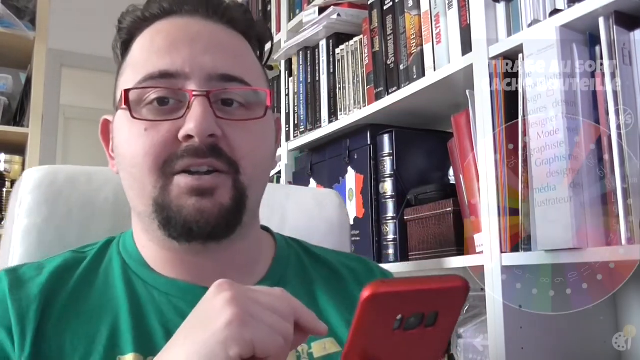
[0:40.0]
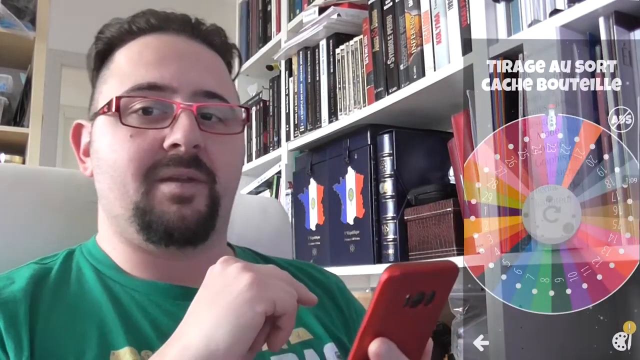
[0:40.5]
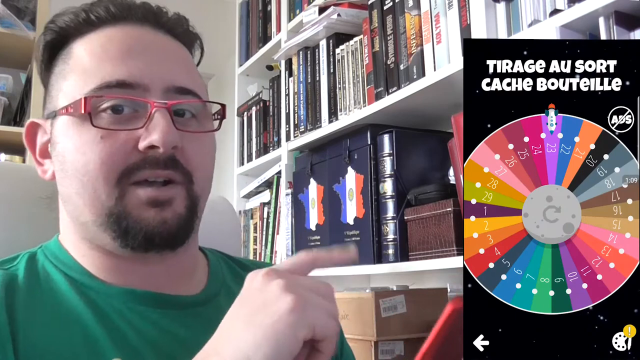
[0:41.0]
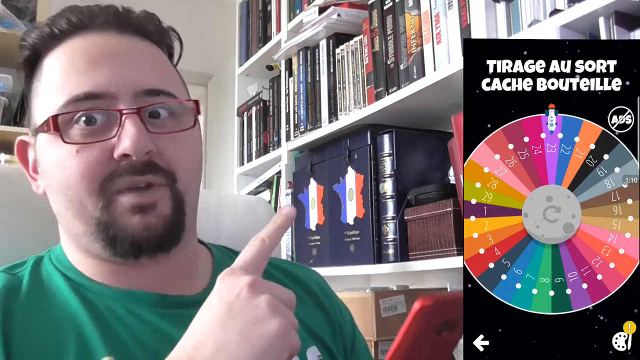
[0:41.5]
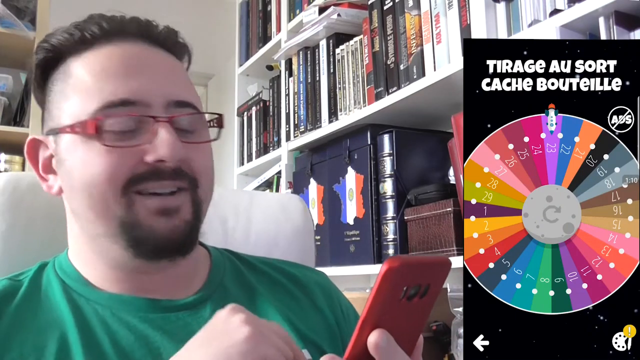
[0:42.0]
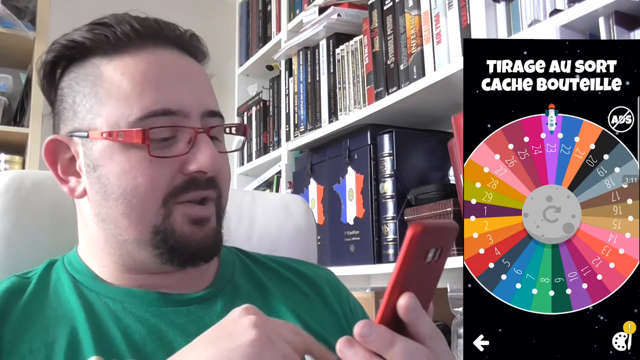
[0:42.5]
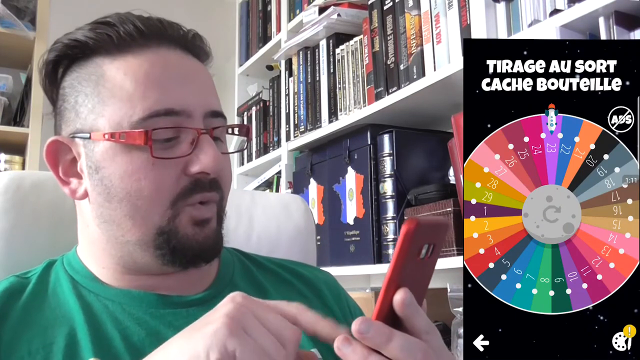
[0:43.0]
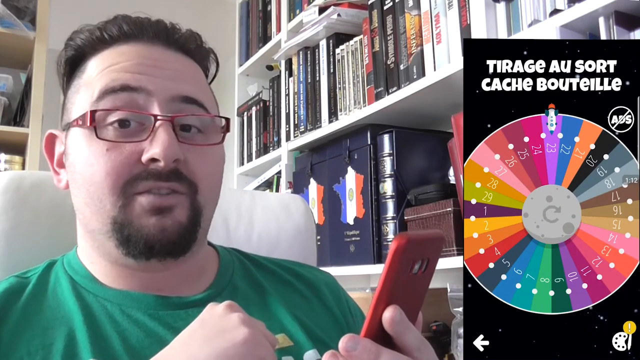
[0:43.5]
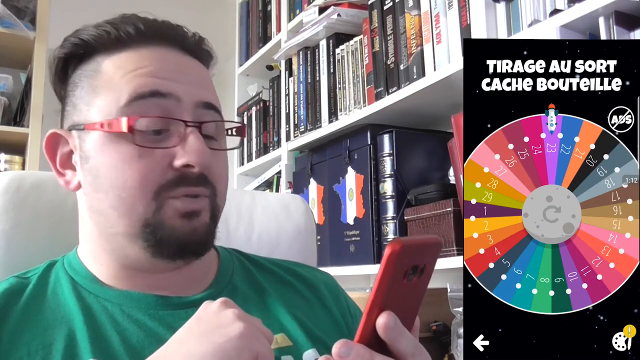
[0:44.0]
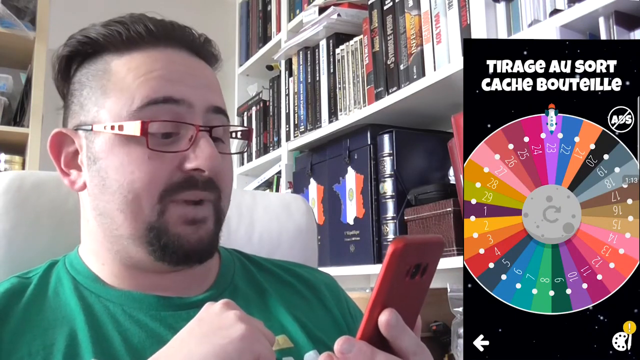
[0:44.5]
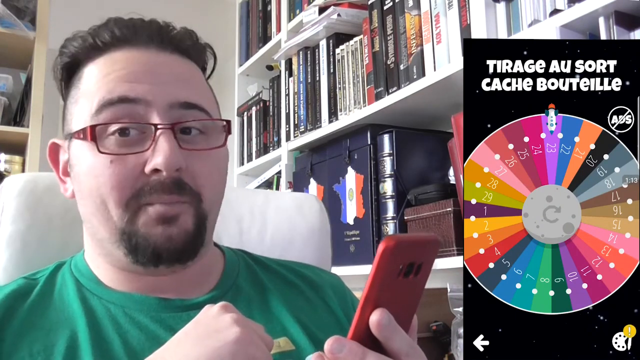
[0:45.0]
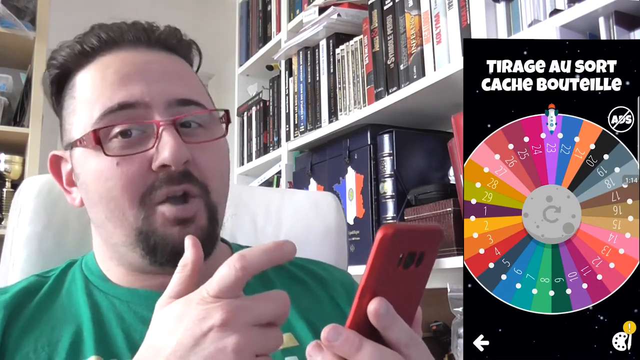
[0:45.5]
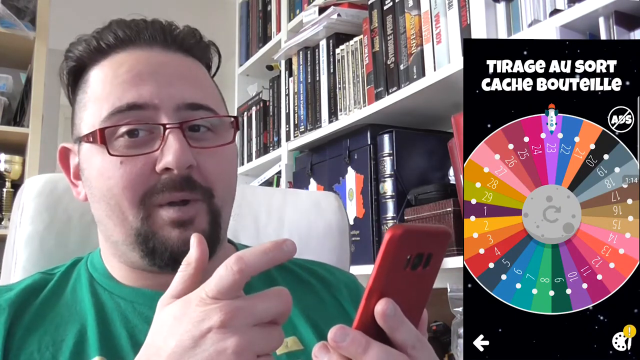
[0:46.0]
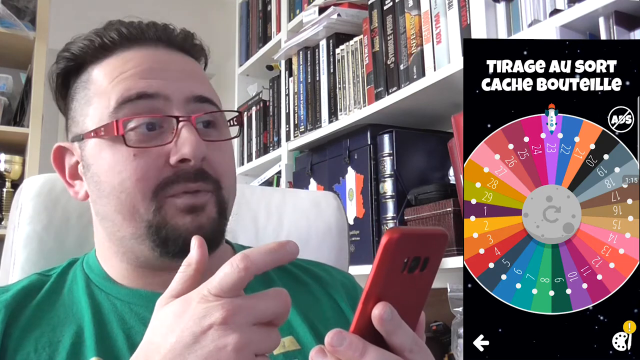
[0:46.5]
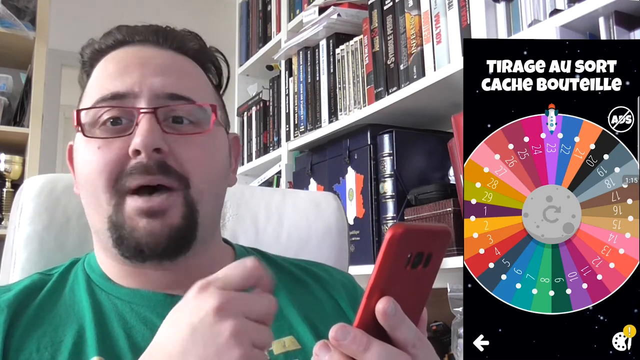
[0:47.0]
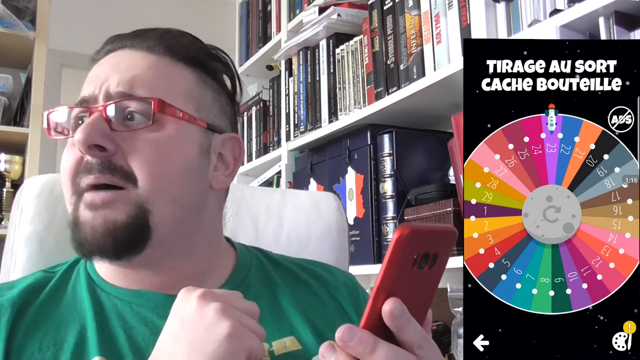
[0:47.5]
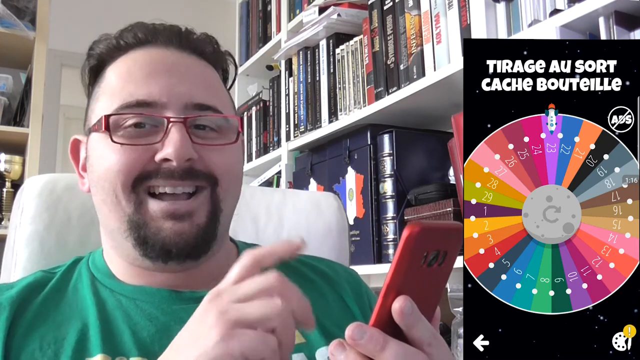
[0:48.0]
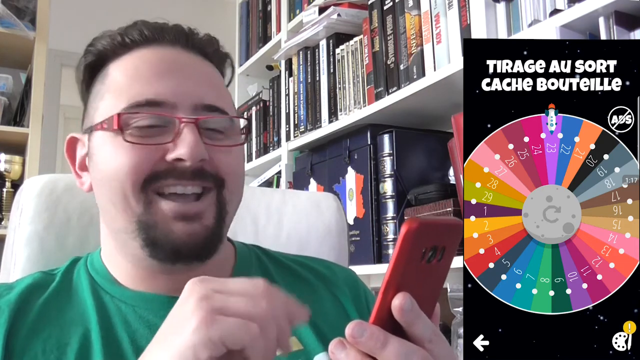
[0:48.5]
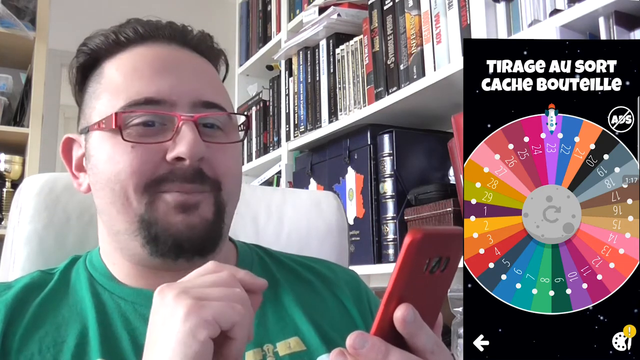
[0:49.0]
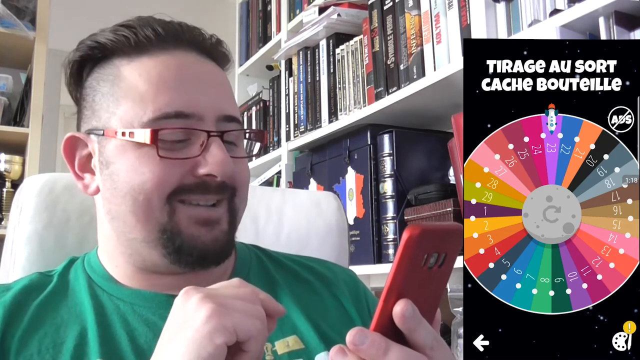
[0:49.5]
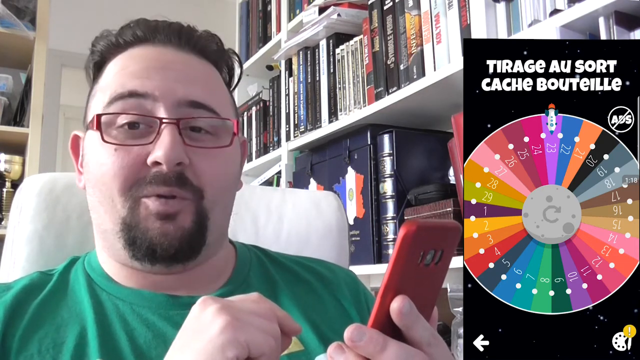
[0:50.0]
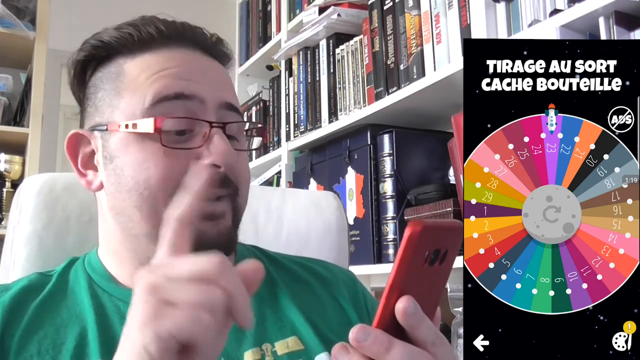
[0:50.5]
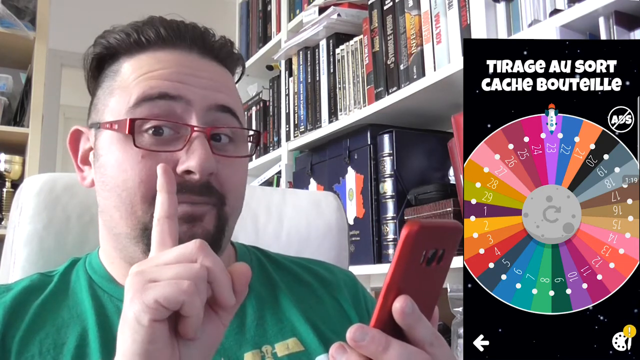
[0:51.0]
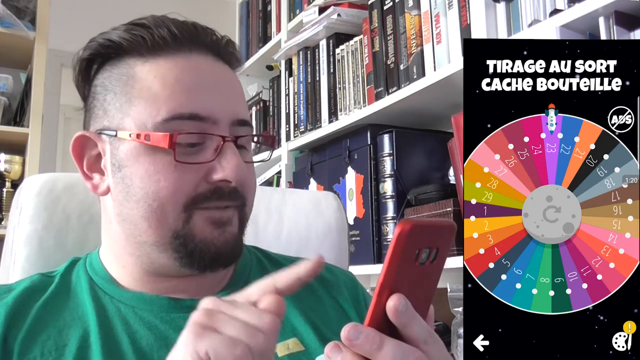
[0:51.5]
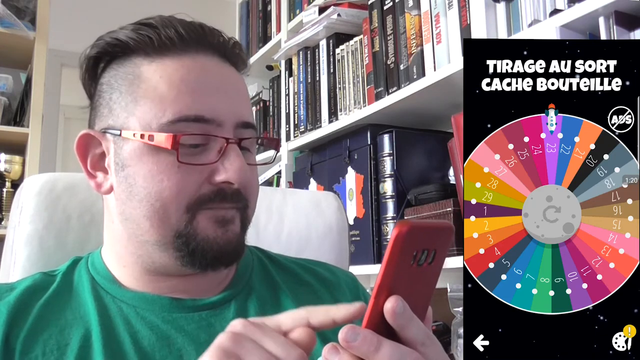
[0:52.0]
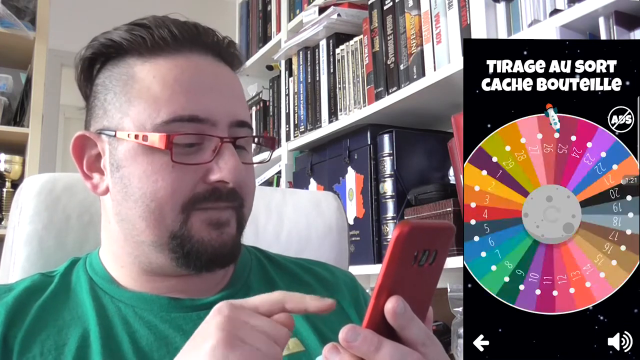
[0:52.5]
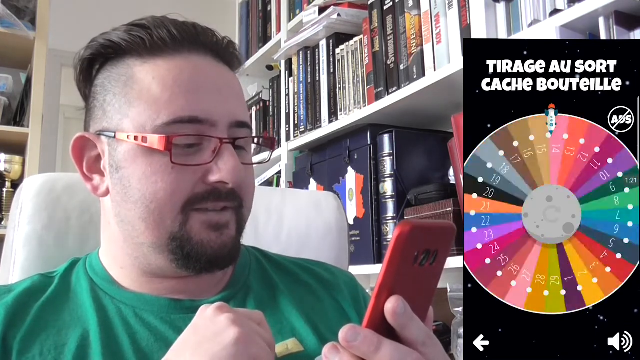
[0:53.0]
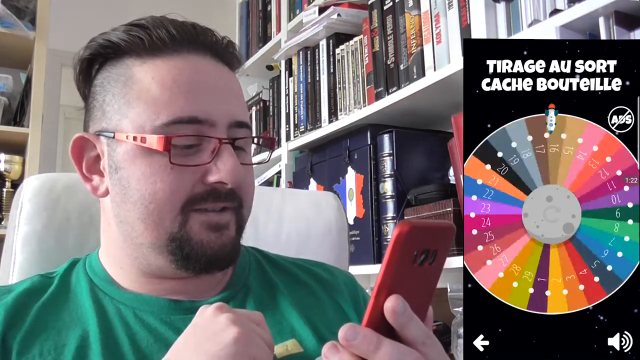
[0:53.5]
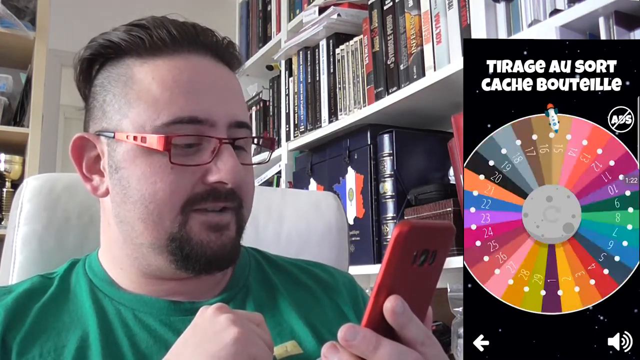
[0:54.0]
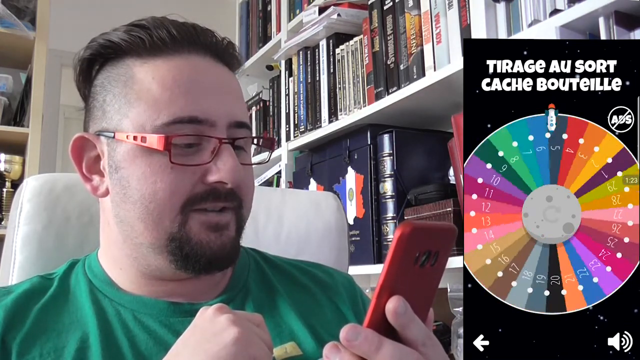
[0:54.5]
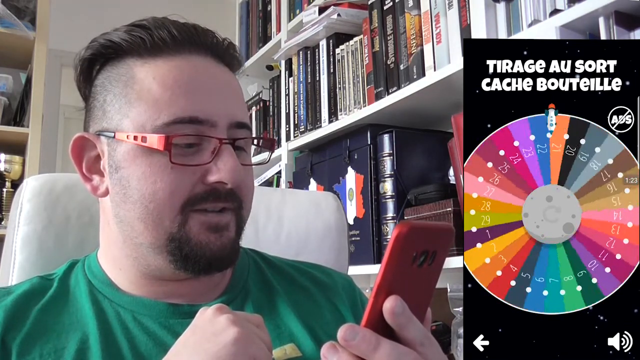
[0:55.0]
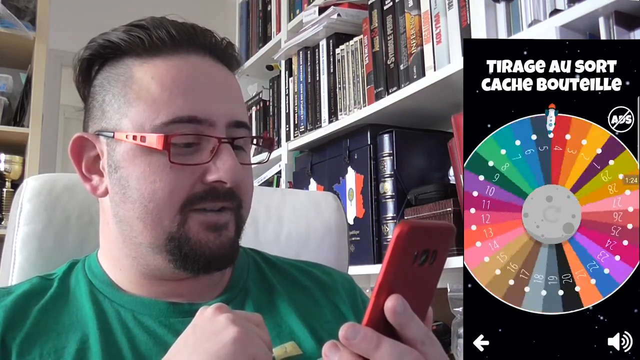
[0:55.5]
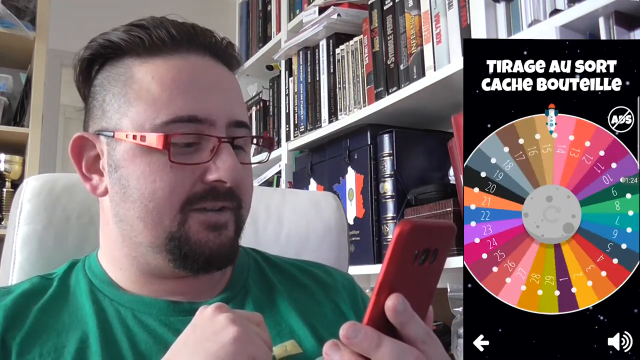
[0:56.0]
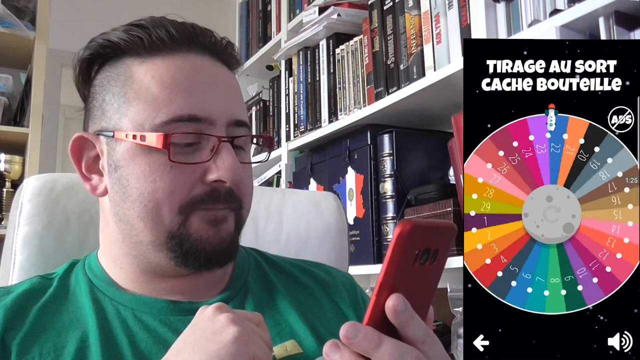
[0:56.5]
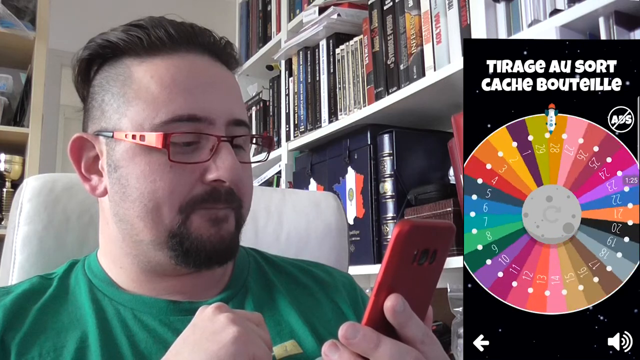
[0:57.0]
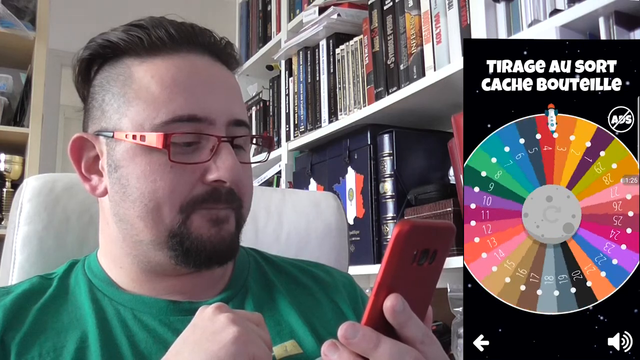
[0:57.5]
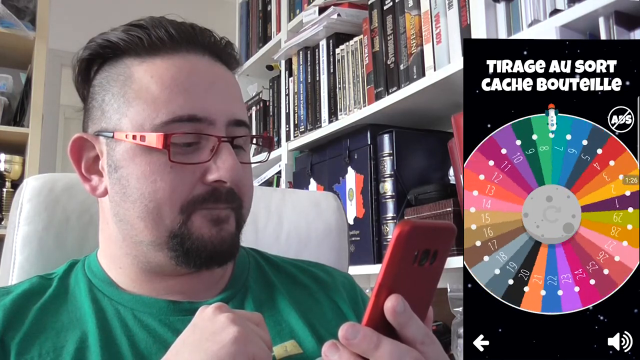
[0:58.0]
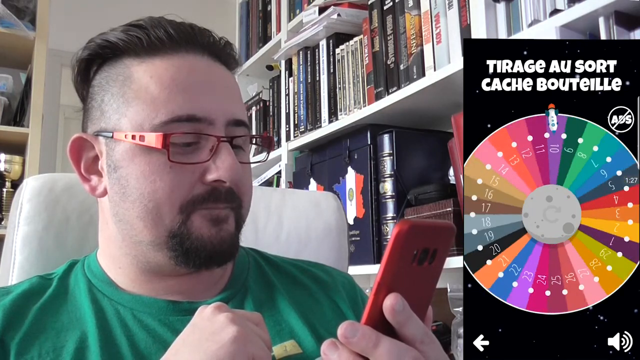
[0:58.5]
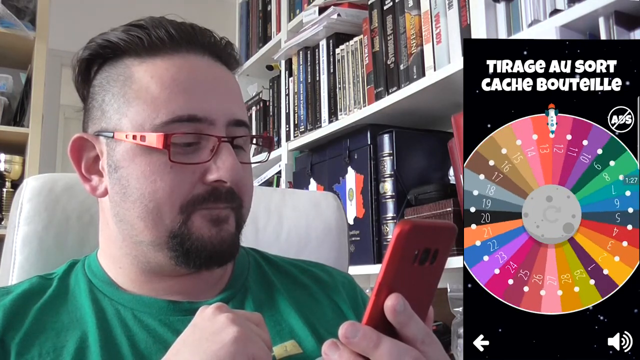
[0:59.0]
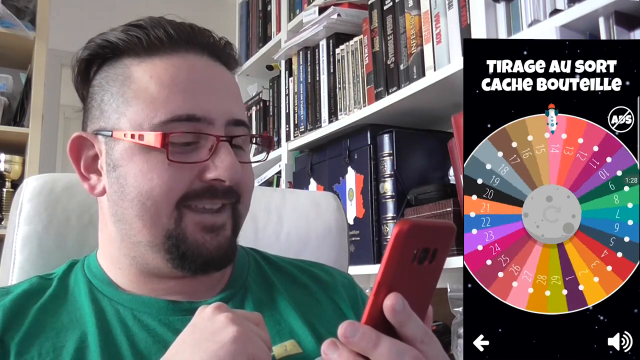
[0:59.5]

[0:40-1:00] The man seems to be playing a game, possibly gambling or just playing for fun, apparently to pick the color he wants the design to look like, choosing from the available options.